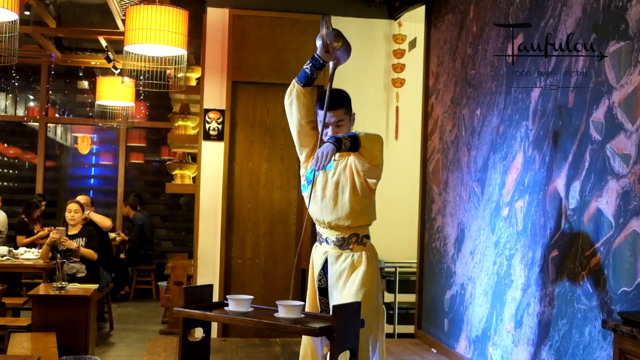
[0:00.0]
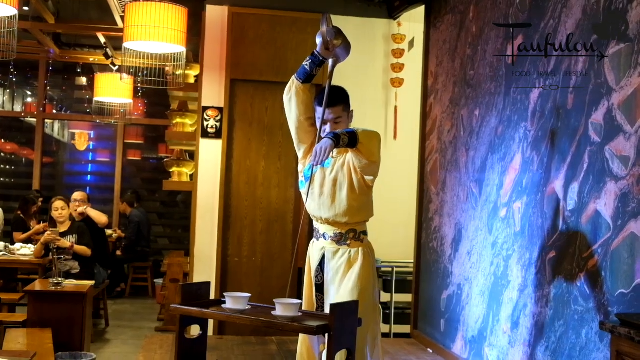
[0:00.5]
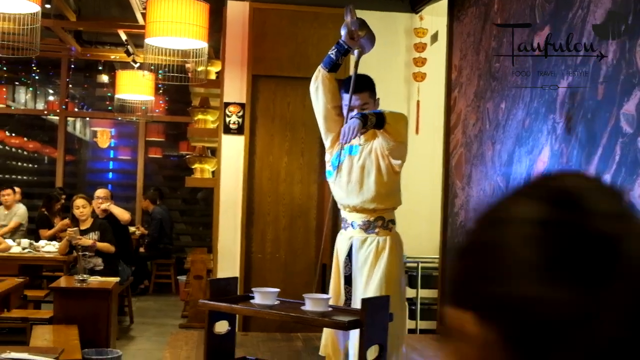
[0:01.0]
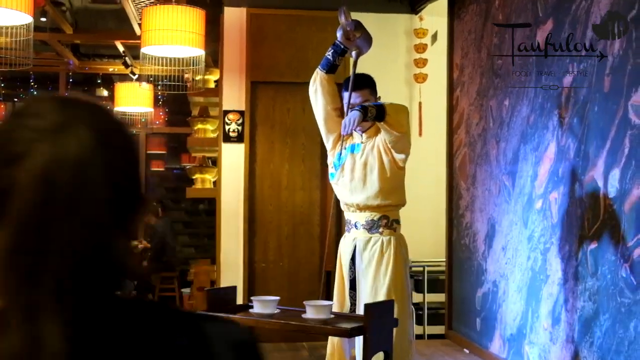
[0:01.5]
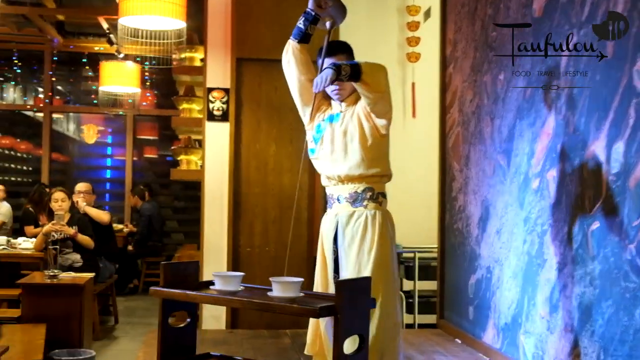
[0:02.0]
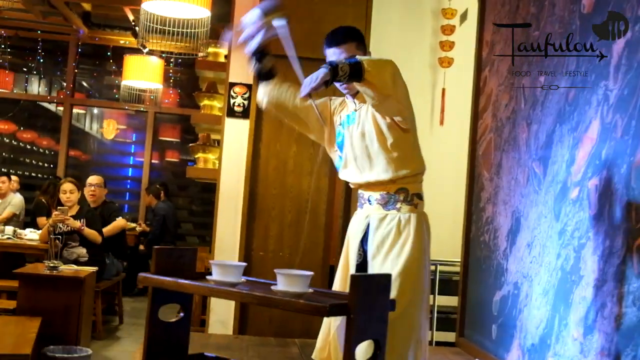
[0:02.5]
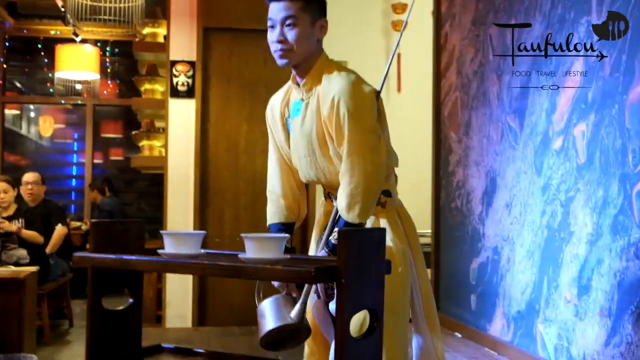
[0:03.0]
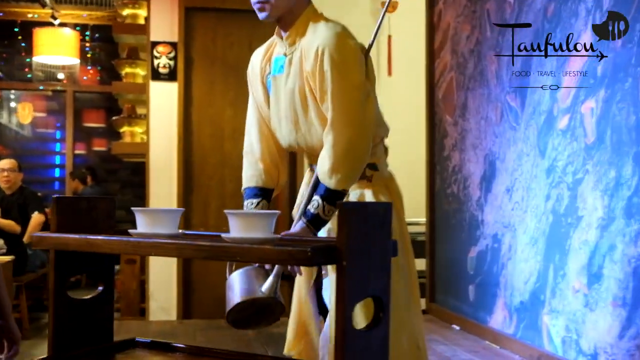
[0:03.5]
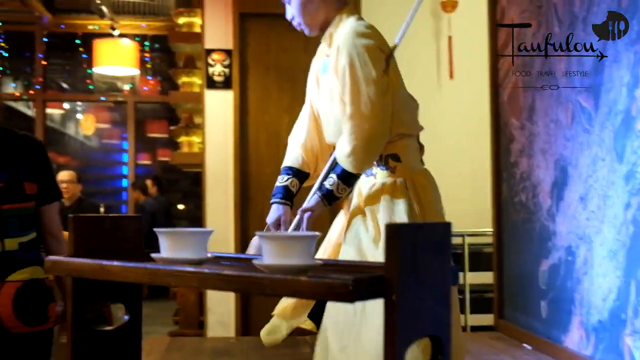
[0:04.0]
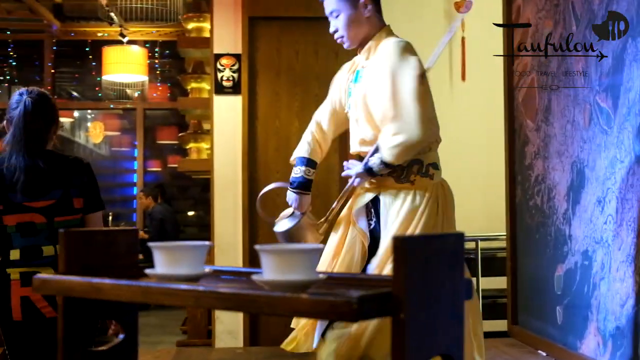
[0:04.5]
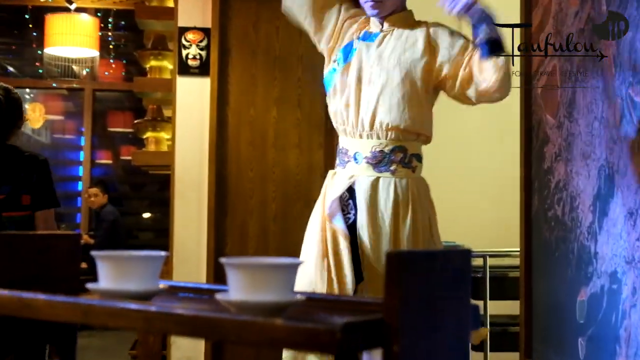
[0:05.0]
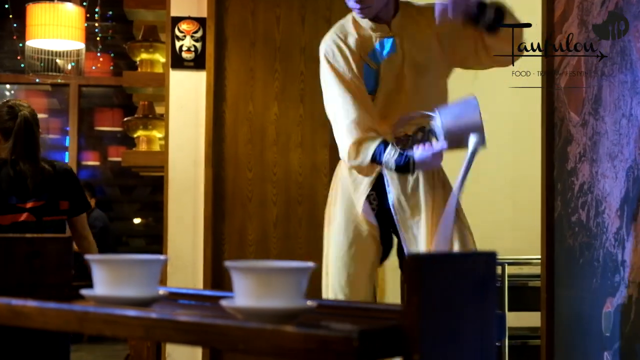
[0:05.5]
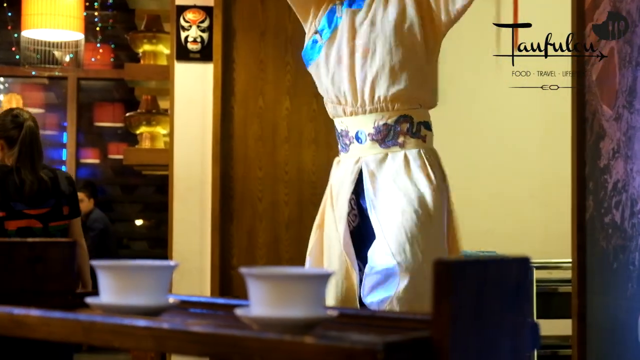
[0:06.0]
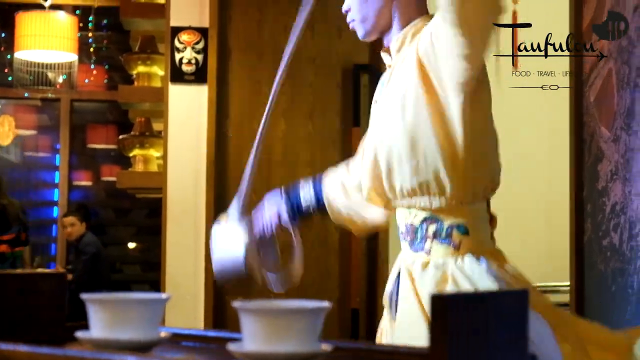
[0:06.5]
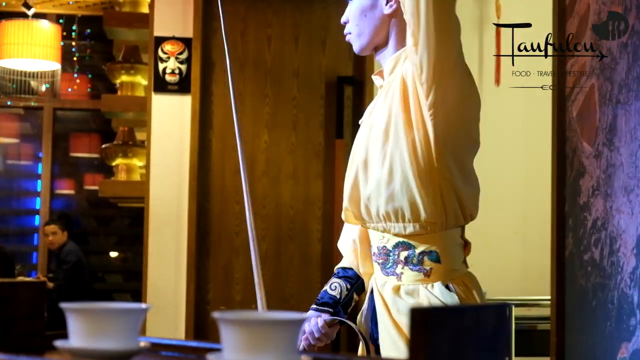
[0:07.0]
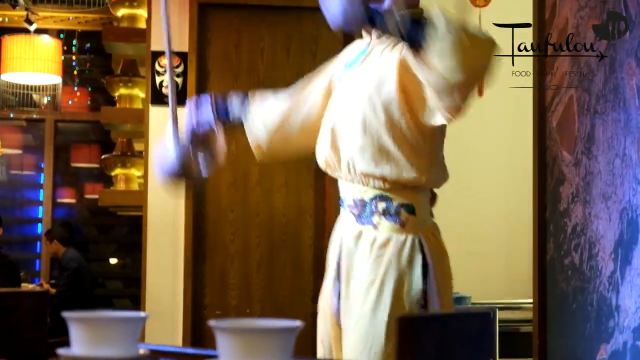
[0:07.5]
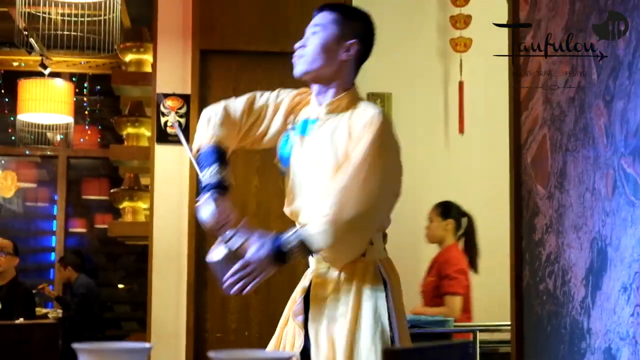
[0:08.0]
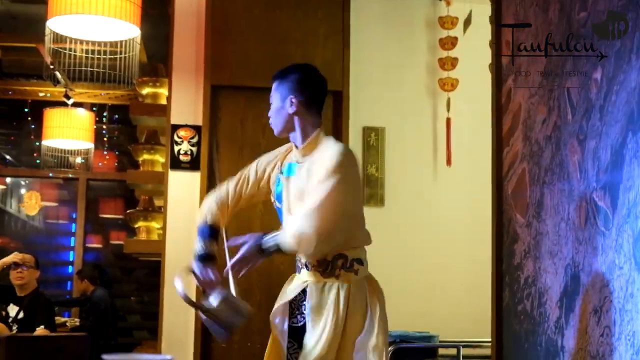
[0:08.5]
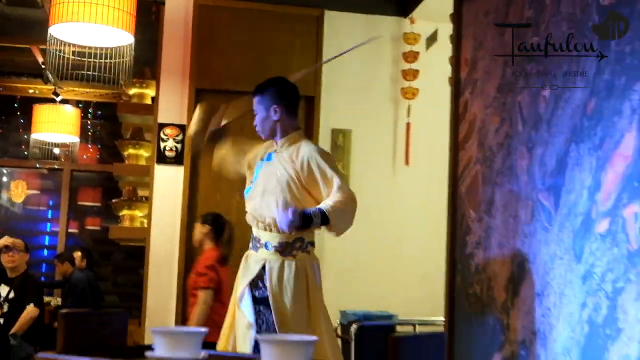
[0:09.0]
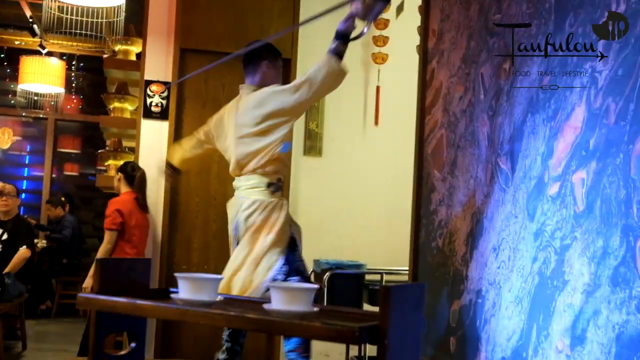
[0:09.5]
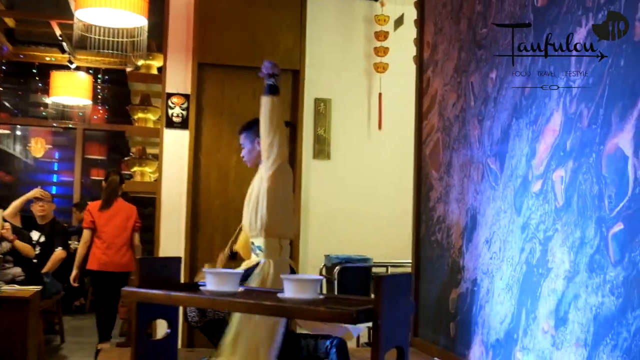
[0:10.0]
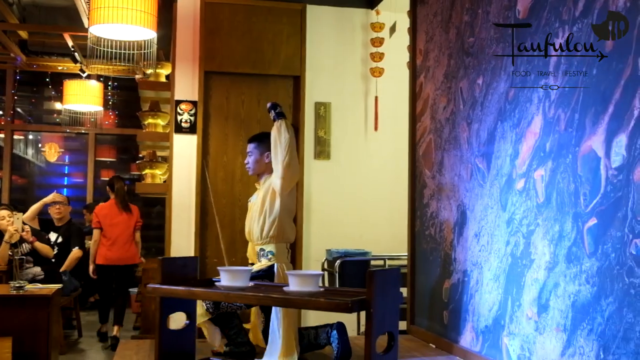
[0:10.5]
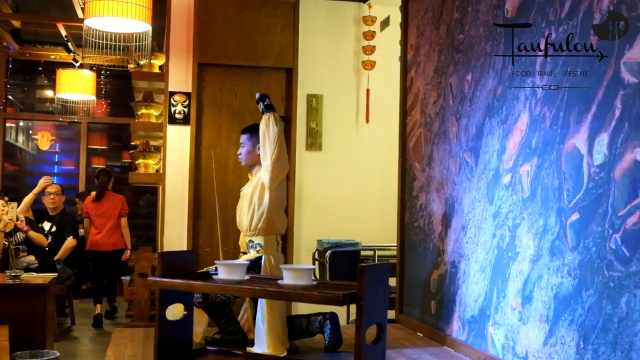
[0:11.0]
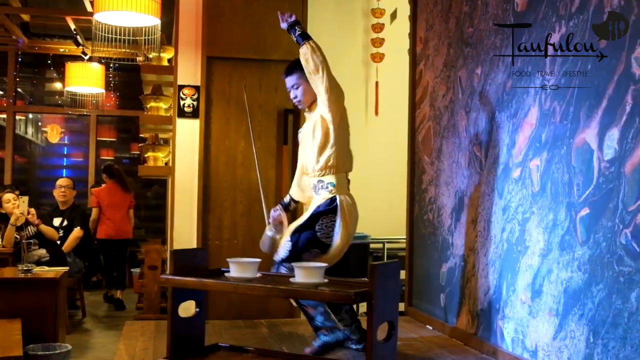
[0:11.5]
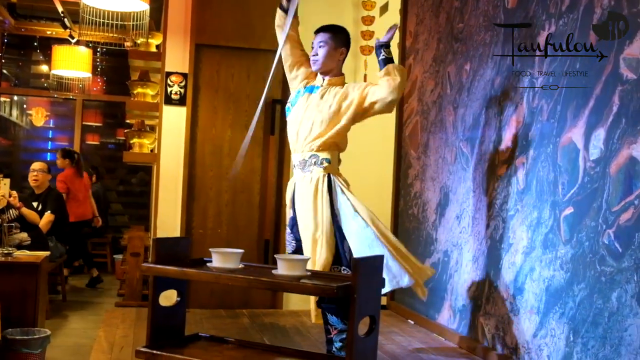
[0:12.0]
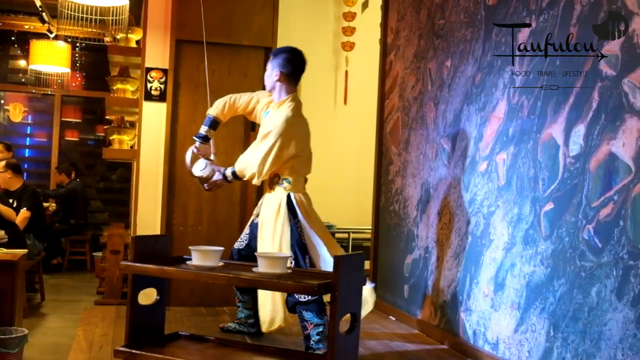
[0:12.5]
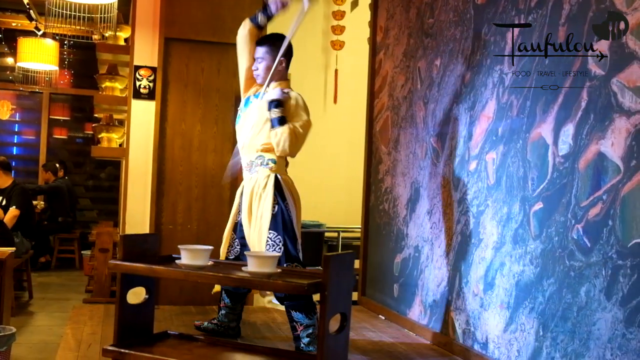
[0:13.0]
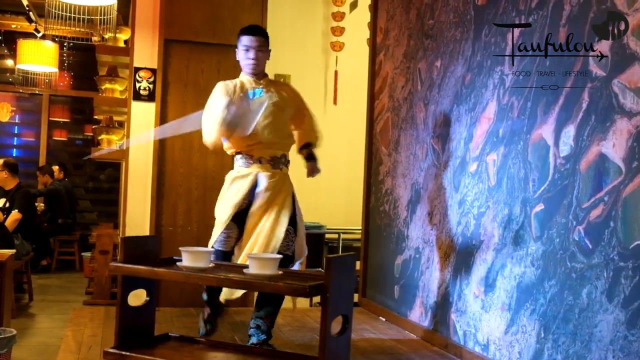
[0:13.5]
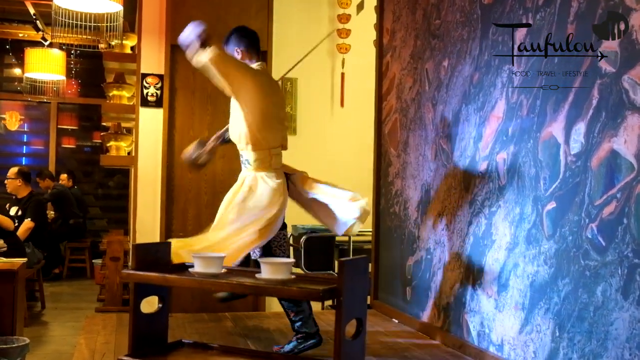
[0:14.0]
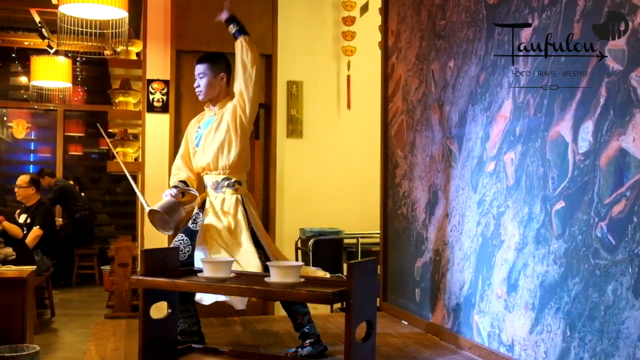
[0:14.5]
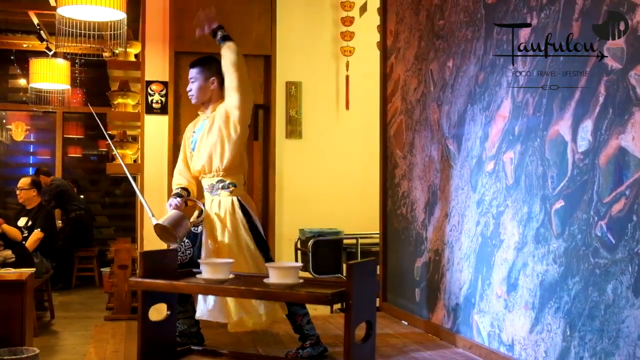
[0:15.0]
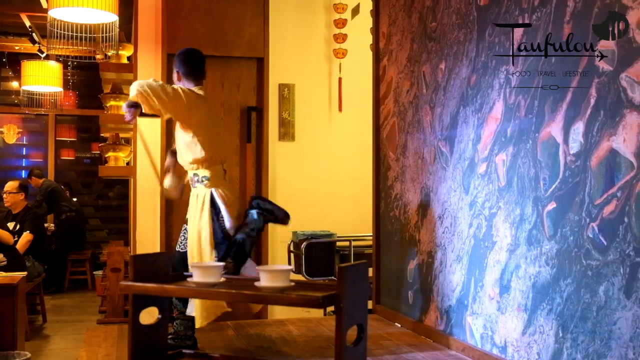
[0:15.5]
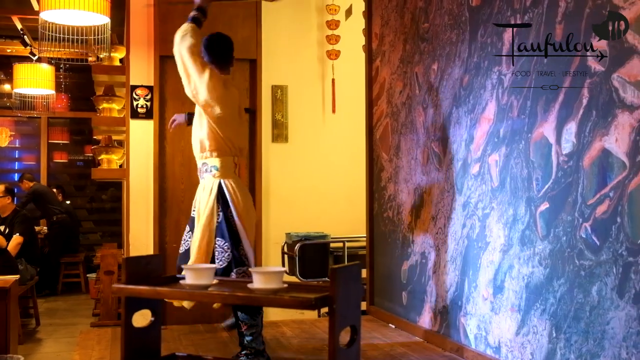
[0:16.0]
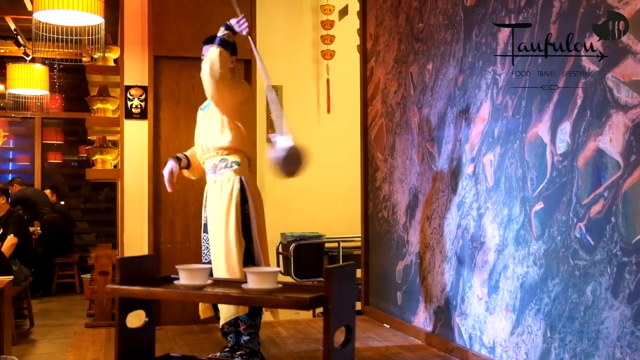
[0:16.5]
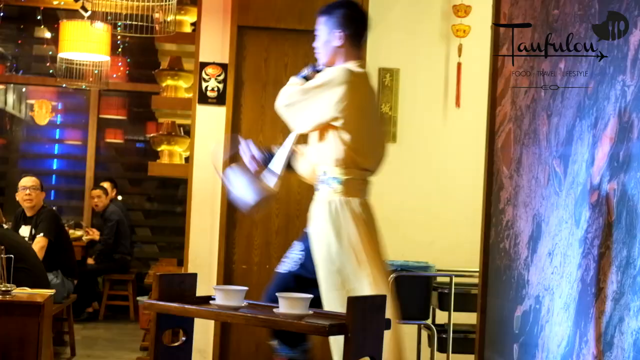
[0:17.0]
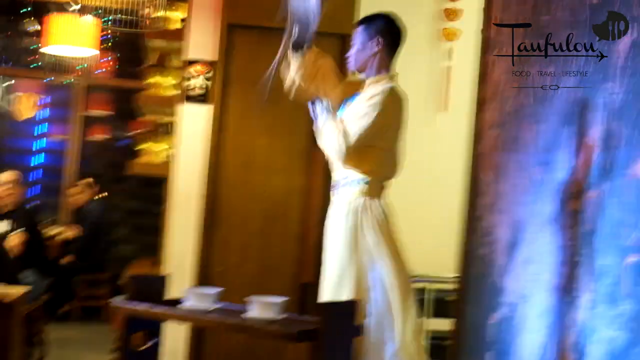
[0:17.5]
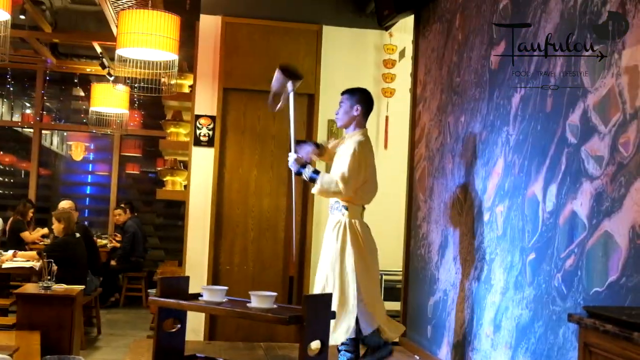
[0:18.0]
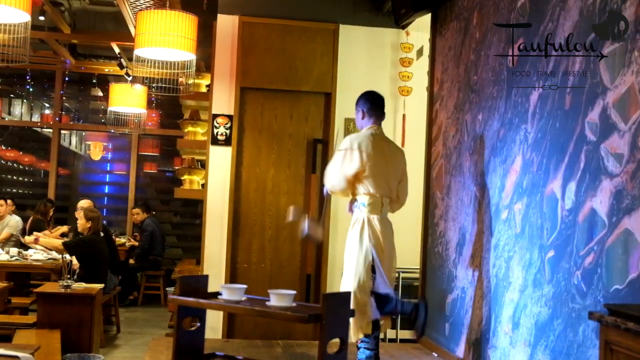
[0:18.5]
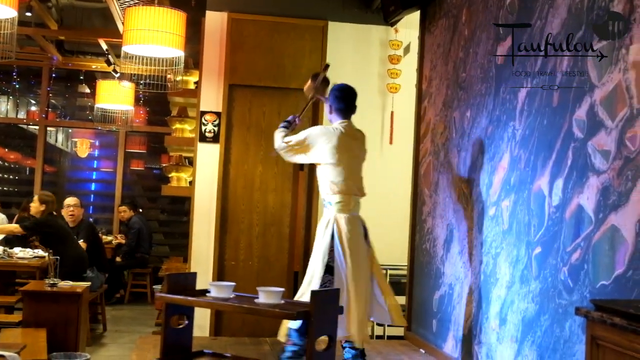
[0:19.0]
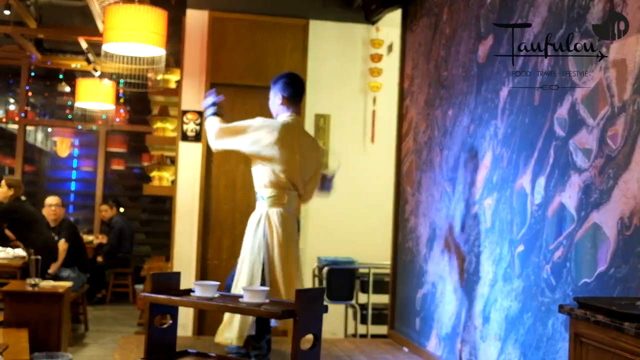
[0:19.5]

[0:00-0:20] A person wearing something yellow, kind of like a sweater, holds a sword and does maneuvers with it on a stage. He seems to twirl it around and spin with it, then grabs it with the other hand and starts to twirl it like a baton. On the stage there is also a tray with two cups and a saucer. People are sitting down watching him perform as they eat, so he seems to be in a restaurant. The background kind of looks like it has a lot of black and pink colors, and lamps are visible on the ceiling.